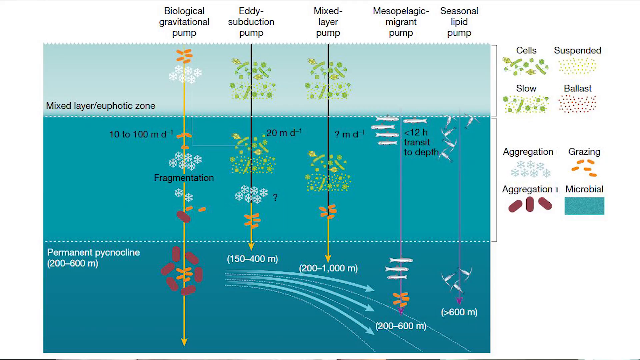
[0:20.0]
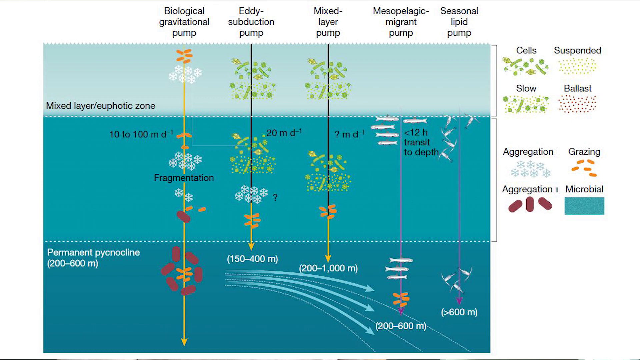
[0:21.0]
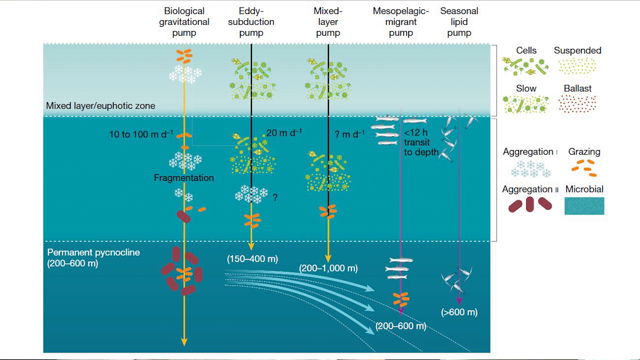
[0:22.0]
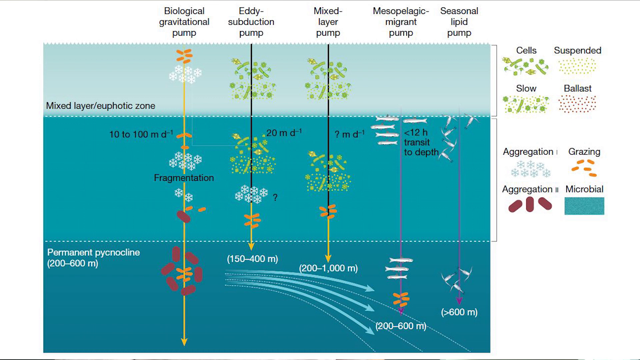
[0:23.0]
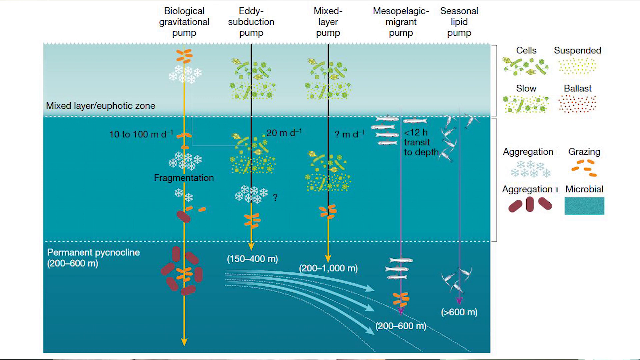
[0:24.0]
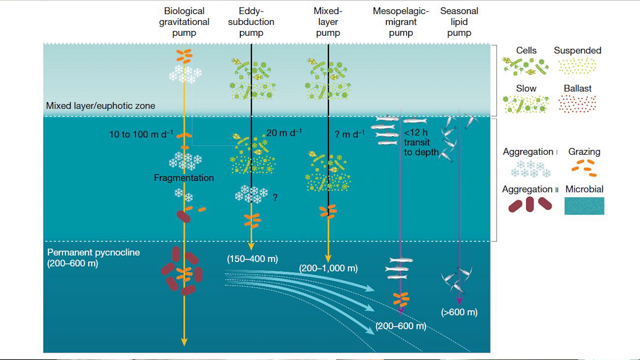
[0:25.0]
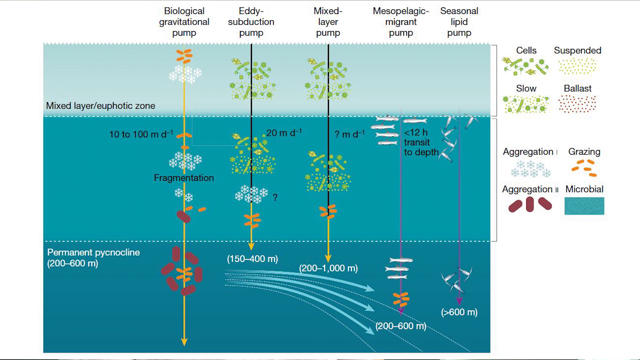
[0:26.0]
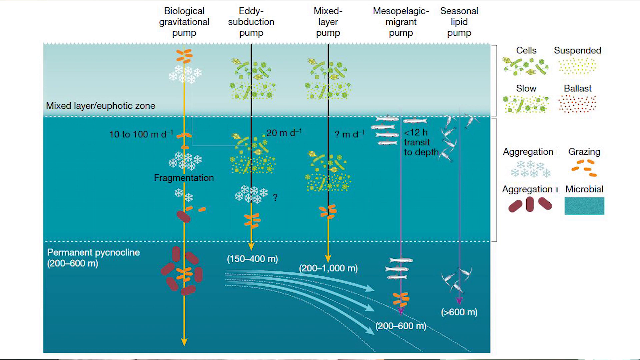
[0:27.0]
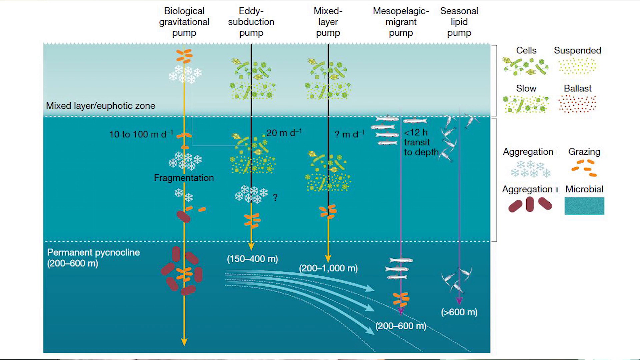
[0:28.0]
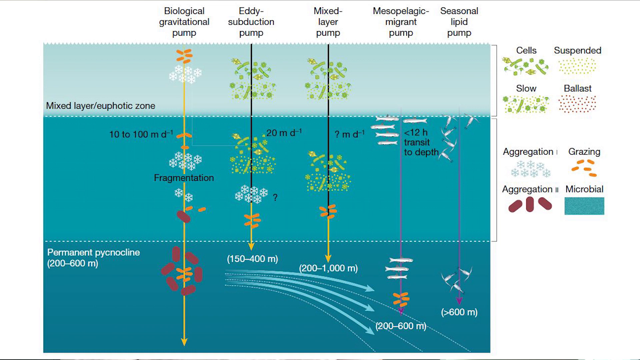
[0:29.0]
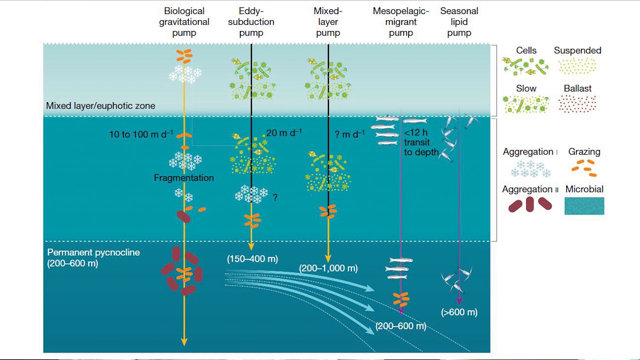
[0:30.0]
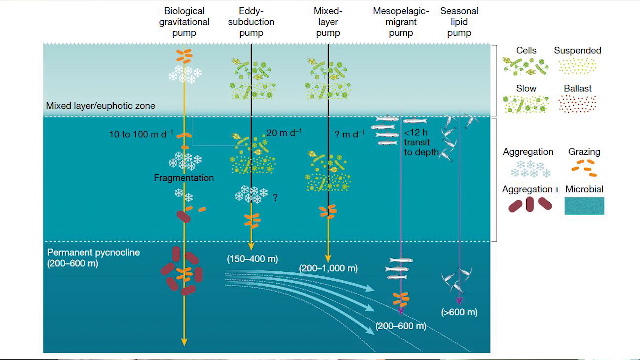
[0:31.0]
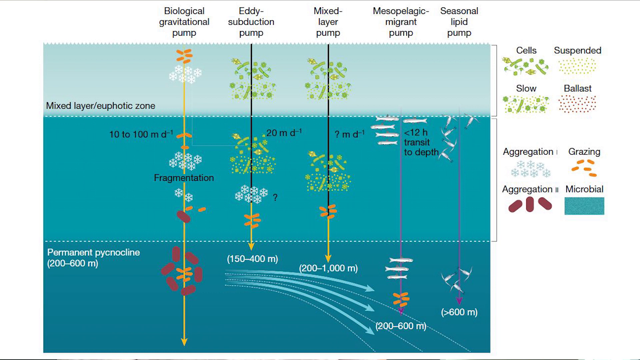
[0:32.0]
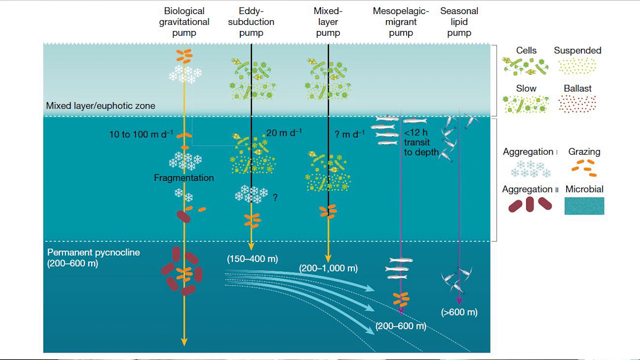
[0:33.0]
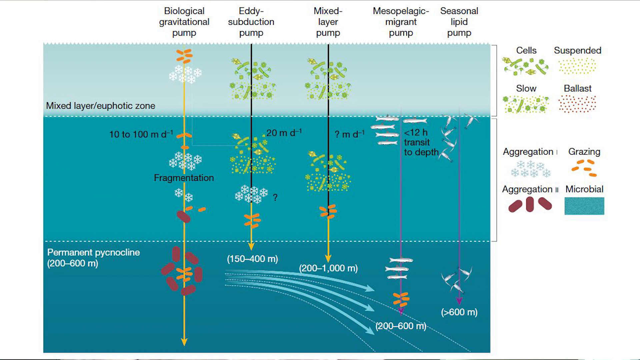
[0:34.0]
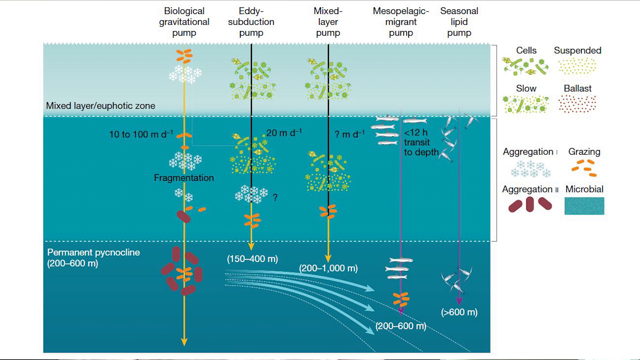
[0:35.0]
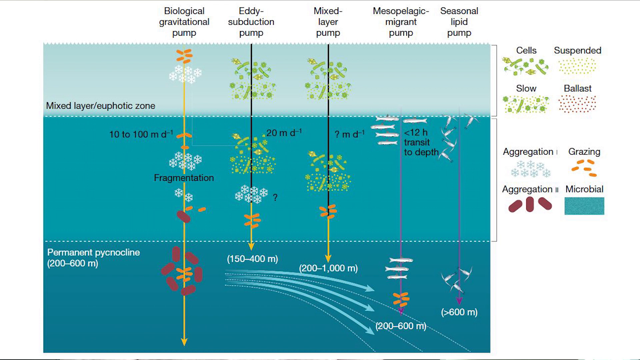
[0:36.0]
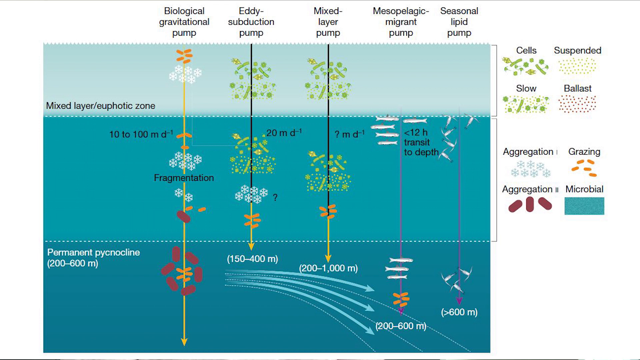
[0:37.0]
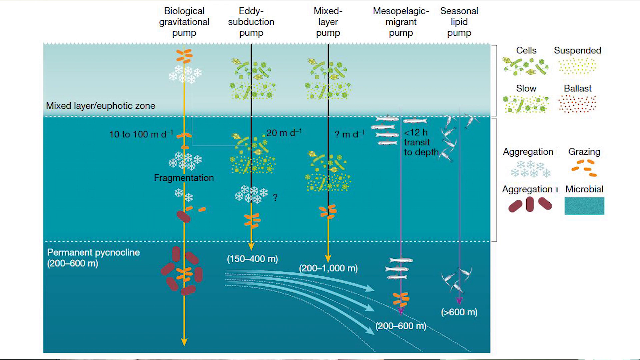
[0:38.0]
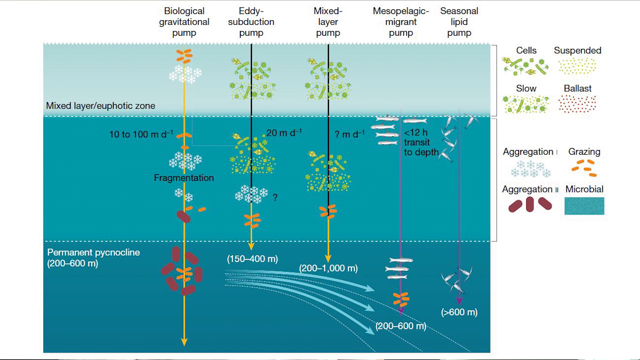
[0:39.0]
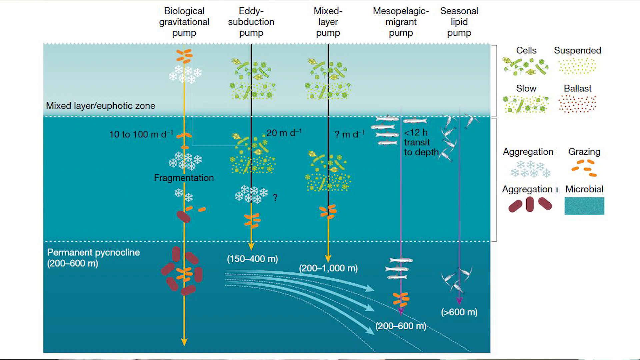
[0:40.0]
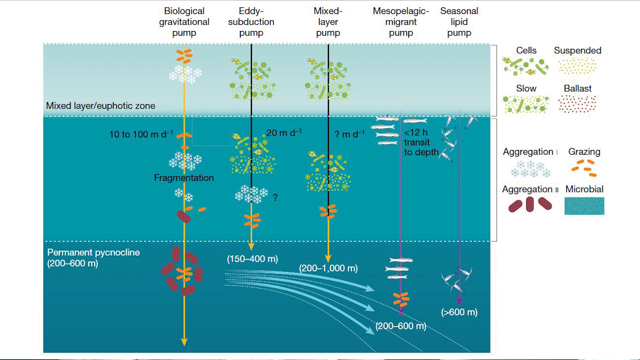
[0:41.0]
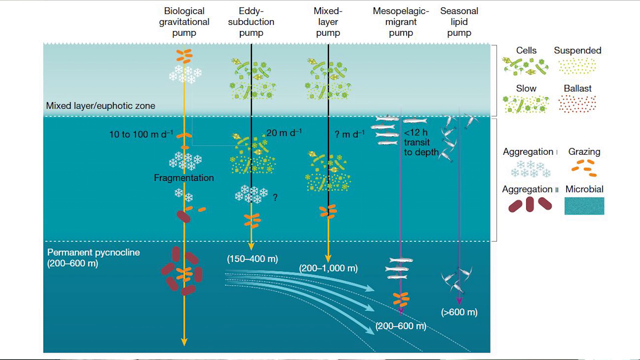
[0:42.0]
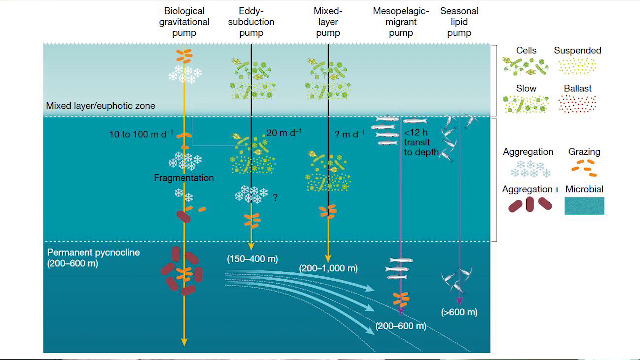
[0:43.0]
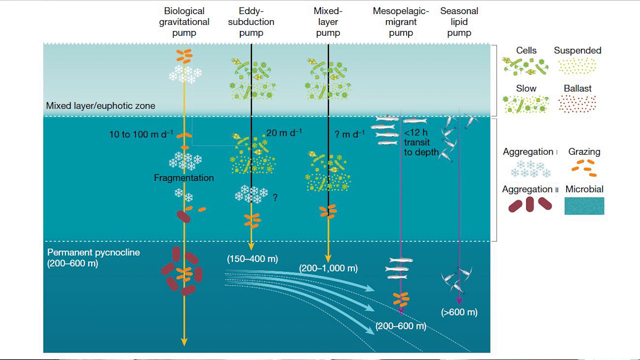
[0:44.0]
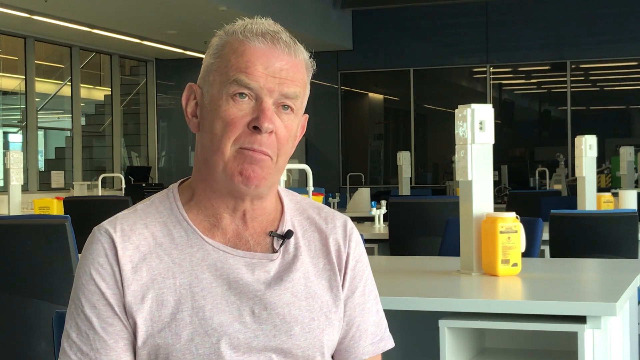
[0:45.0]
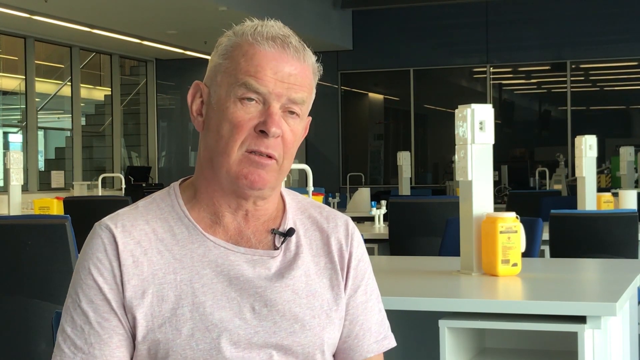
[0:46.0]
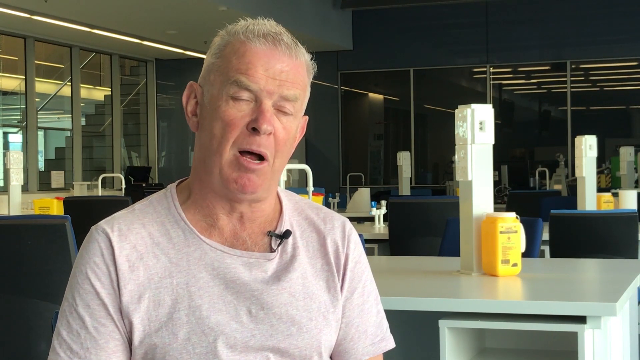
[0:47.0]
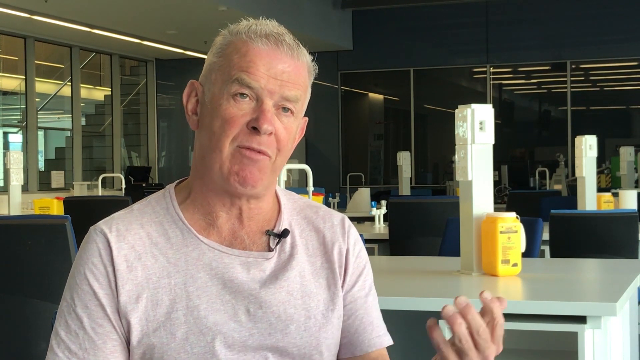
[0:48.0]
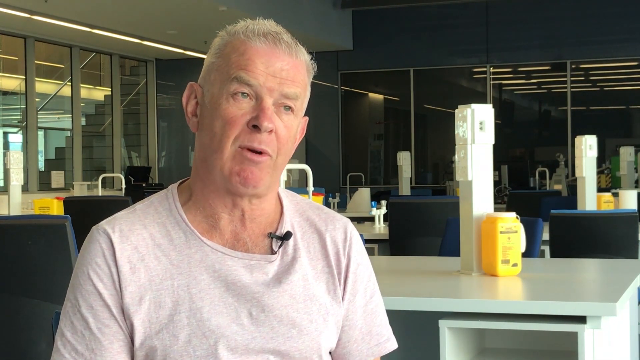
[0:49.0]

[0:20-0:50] A still slide shows three sections of blue in a rectangle with multiple labels in black text. The text reads "biological gravitational pump, eddy subduction pump, mixed layer pump, mesopelagic migrant pump, seasonal lipid pump," and on the right it reads "cells, suspended, slow, ballast, aggregation." There are various similar labels on the chart itself as well. The video then cuts to an interview with an older man with short cut hair, sitting in a chair in a lab-like setting. There are multiple workbenches, each with a yellow hazardous material bin, as well as tall pillars for plugging in ethernet cables and power cables; in the background, some of the lab tables have water taps. He wears a black lapel microphone on his crewneck-style collared shirt. He raises his left hand and motions with it as if explaining something with his hands. He looks upwards and towards the right, showing that he is thinking.